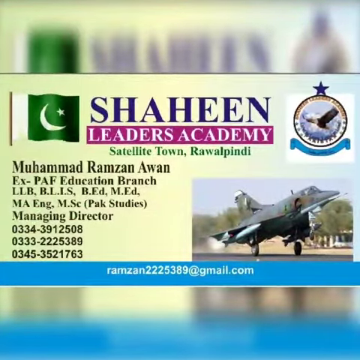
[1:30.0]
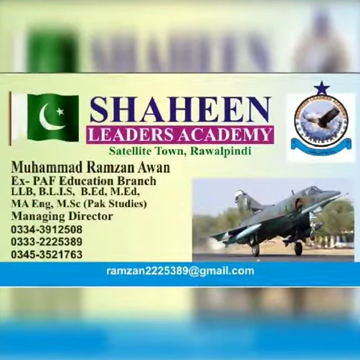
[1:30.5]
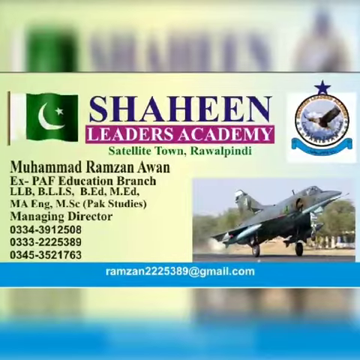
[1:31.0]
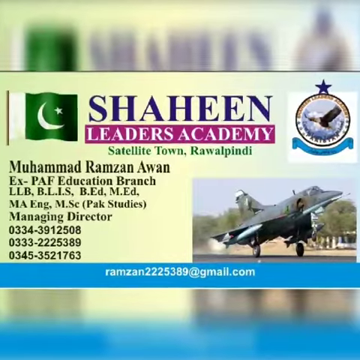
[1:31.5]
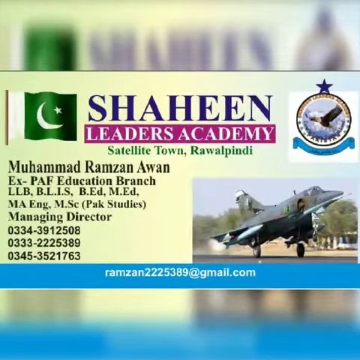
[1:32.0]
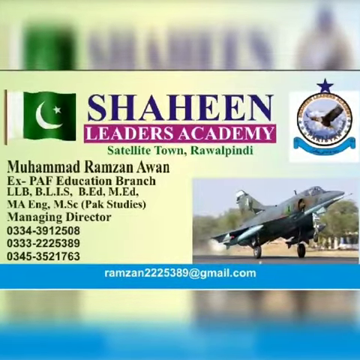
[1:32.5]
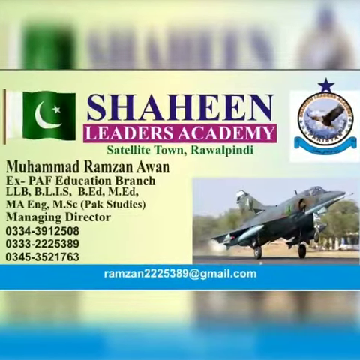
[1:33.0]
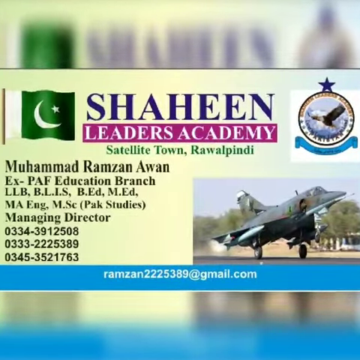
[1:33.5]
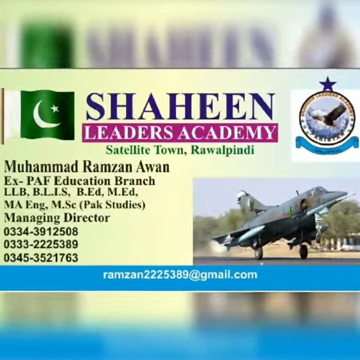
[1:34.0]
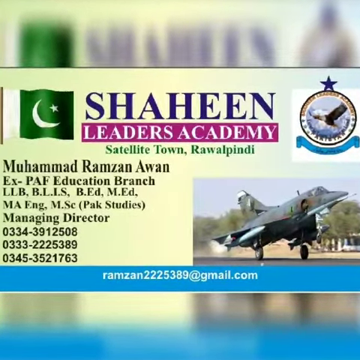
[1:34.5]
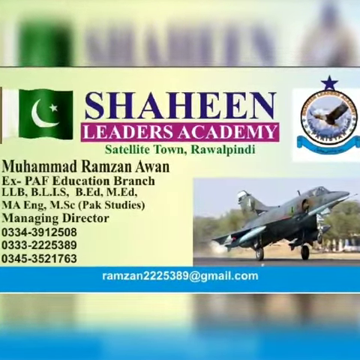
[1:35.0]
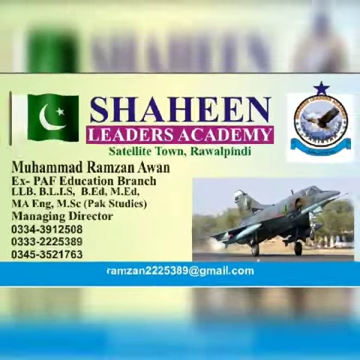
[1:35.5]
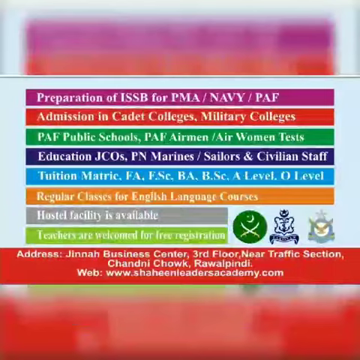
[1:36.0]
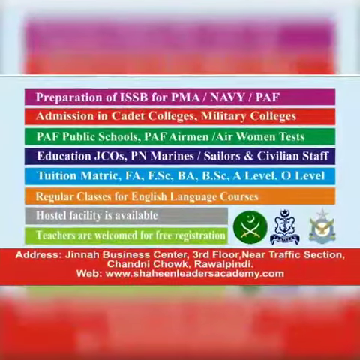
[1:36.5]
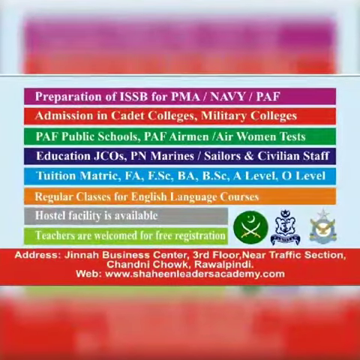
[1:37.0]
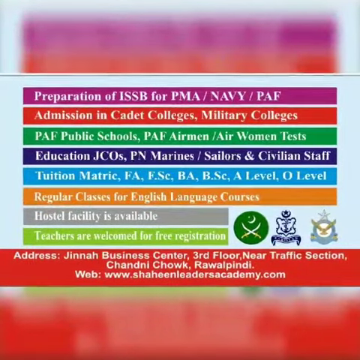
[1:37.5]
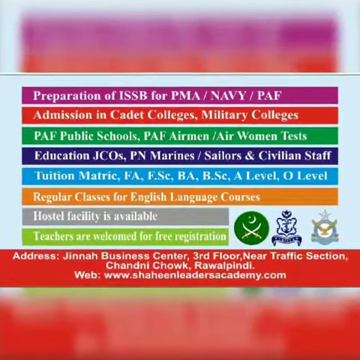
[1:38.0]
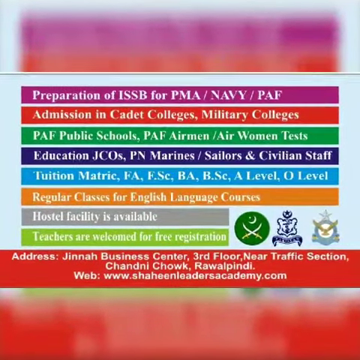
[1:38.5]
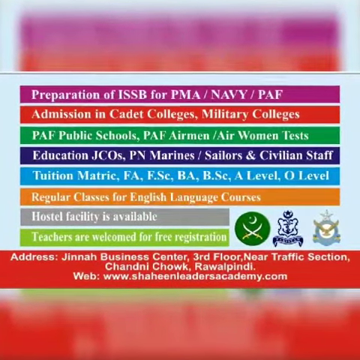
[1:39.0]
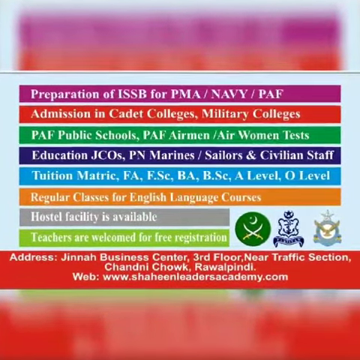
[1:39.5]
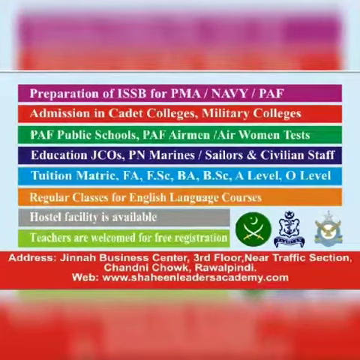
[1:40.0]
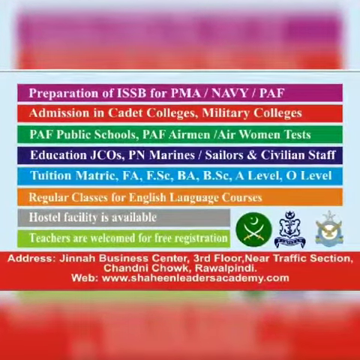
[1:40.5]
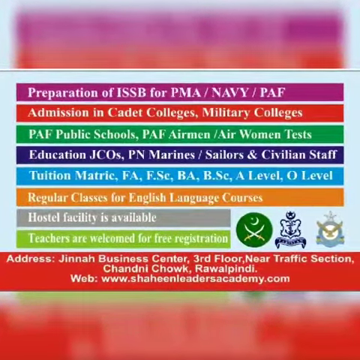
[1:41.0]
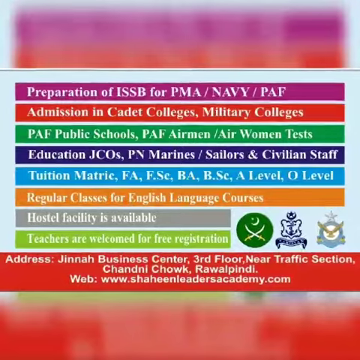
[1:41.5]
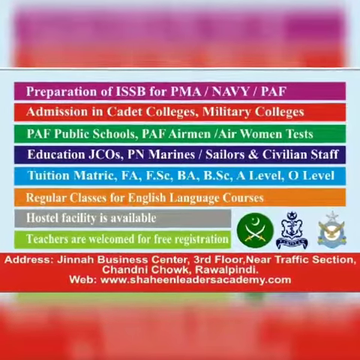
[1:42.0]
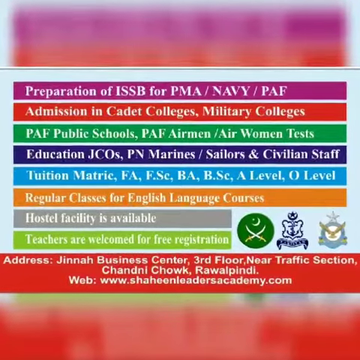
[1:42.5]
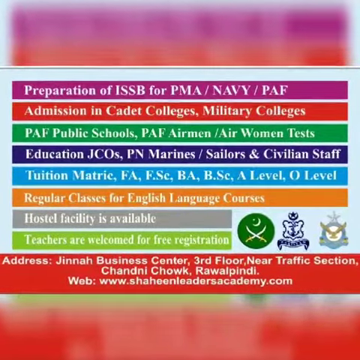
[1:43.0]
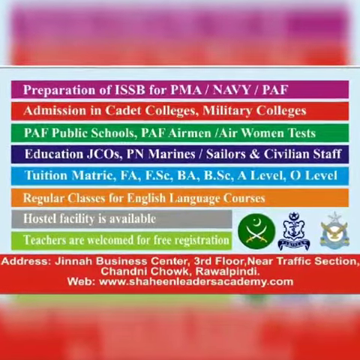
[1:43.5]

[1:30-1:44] The screen looks to be a business card made digital. A flag on the left side is green with a moon and a star. The image from the beginning appears: the bald eagle flying along the snow-capped mountains within the circle, which has a star on it, and a blue ribbon written in Arabic. "SHAHEEN" is in all capitals, with a purple box under it reading "Leaders Academy" in white, and under that green text reads "Satellite Town Raul Padini." There is a picture of what looks like a military vehicle. The card carries a lot of information about Muhammad Razim Alwin, with what are apparently degrees such as "MED" and "BEED," and it looks like "PAC studies" is listed. Several phone numbers and a gmail address are included, and there is a blue banner at the bottom. The video then switches to another screen with many different colors and banners. Its text includes "preparation of" admission, "military school," "regular classes for English language courses," "hostel facility is available," "teachers are welcome" and "free registration," followed by an address. Three other images are next to it that appear to be Islamic in nature.